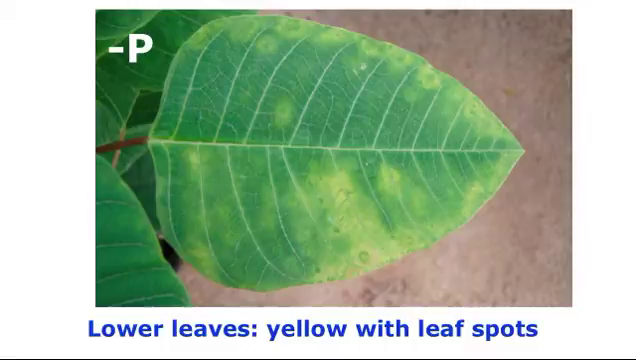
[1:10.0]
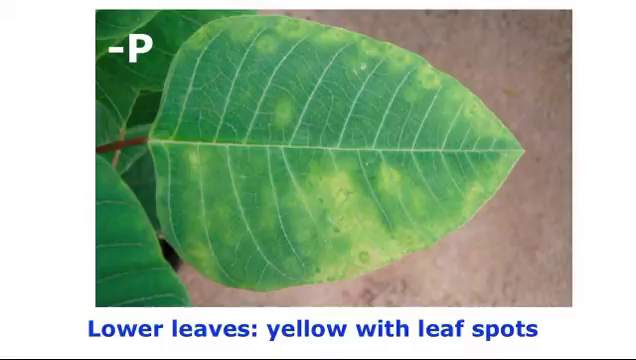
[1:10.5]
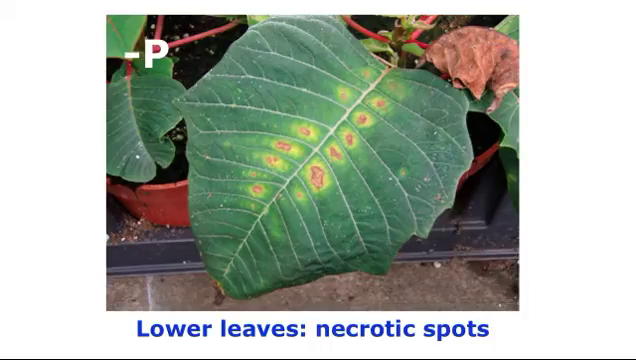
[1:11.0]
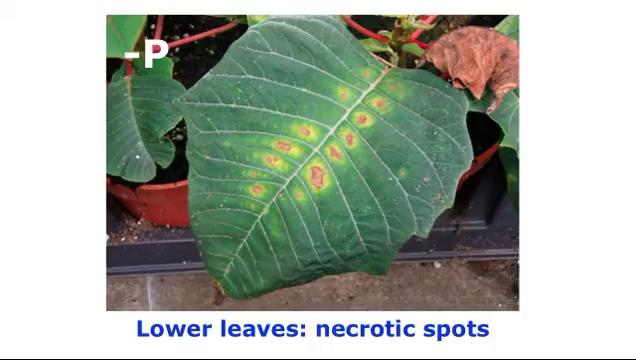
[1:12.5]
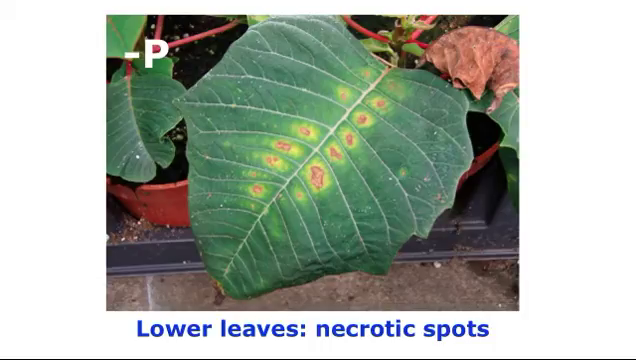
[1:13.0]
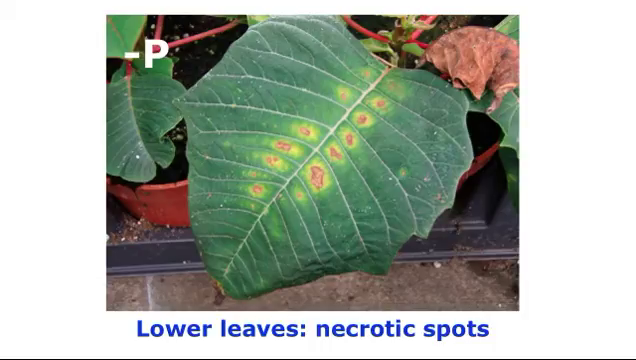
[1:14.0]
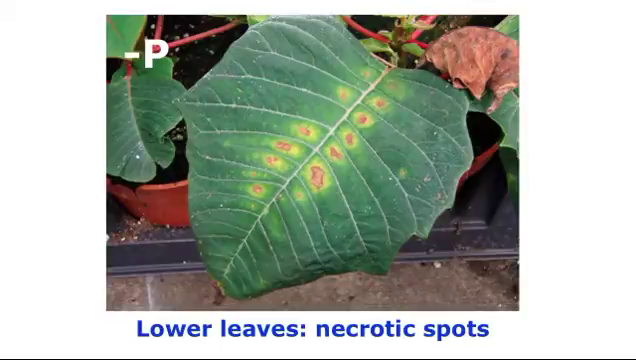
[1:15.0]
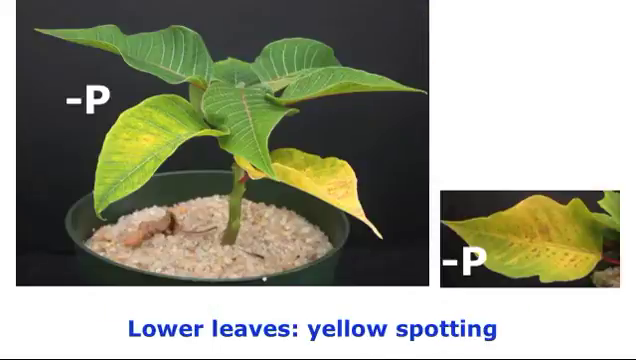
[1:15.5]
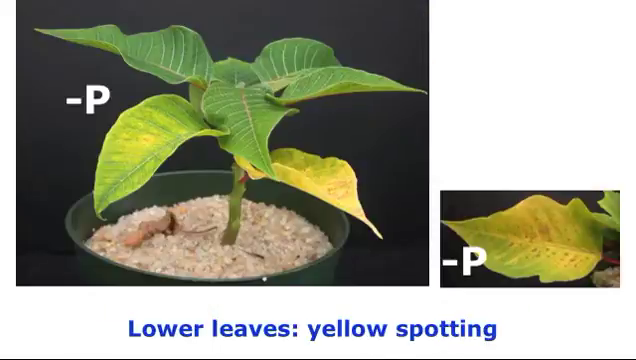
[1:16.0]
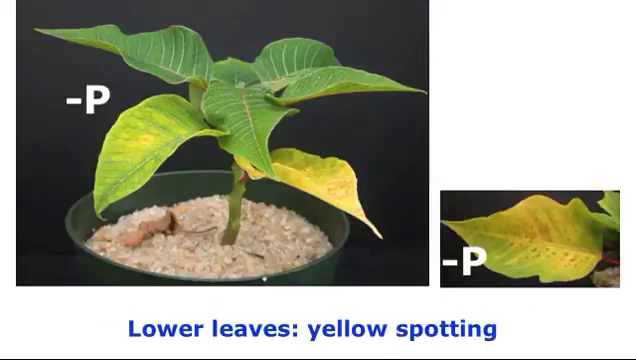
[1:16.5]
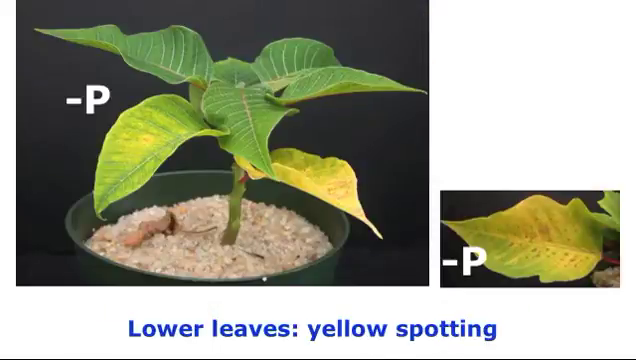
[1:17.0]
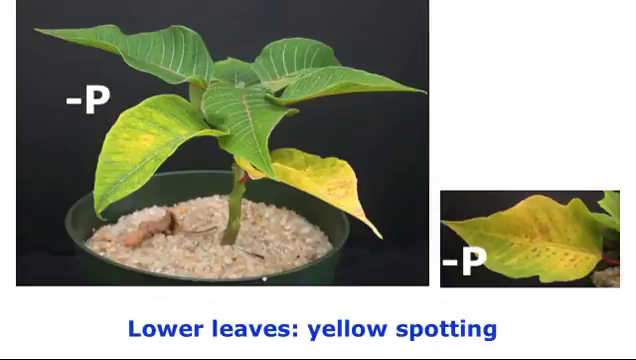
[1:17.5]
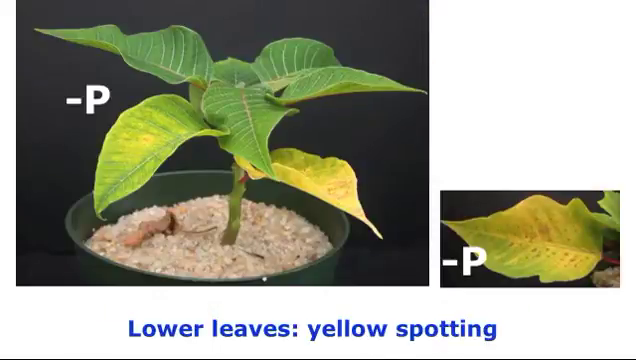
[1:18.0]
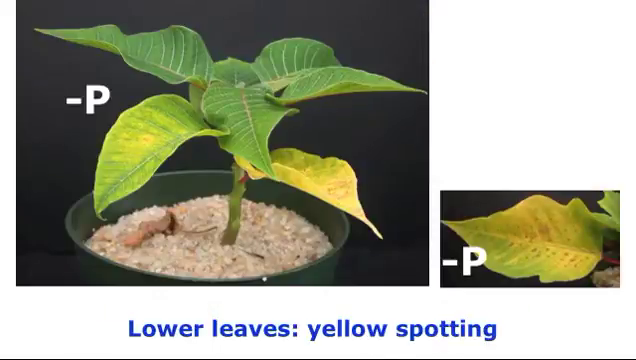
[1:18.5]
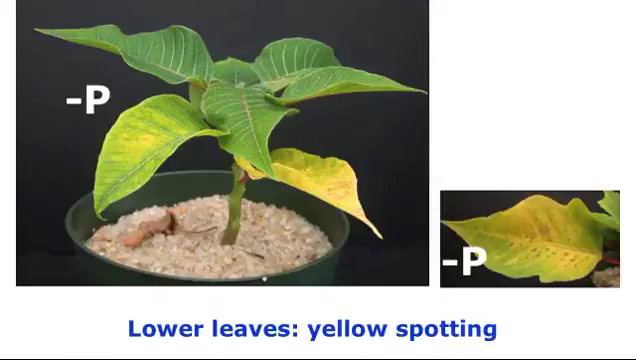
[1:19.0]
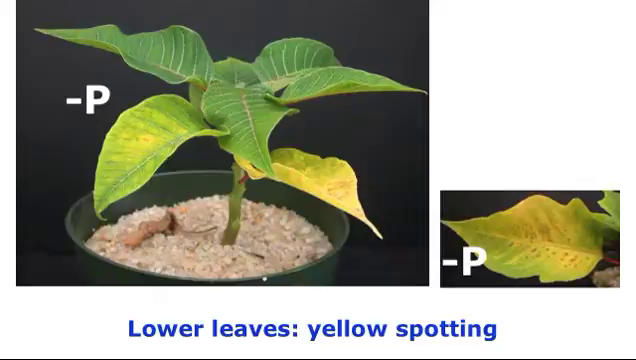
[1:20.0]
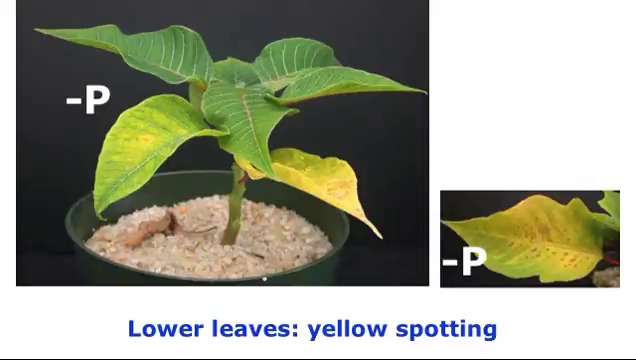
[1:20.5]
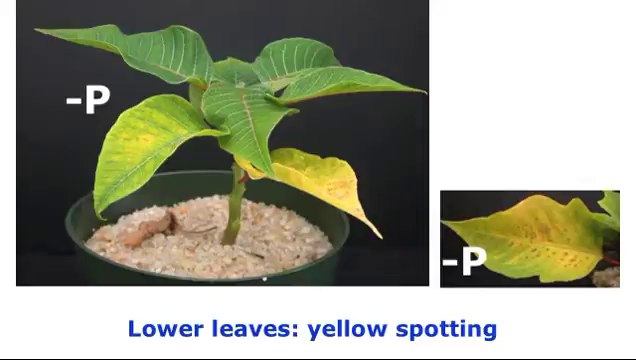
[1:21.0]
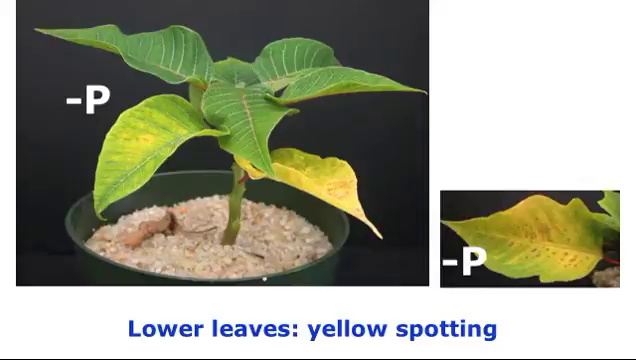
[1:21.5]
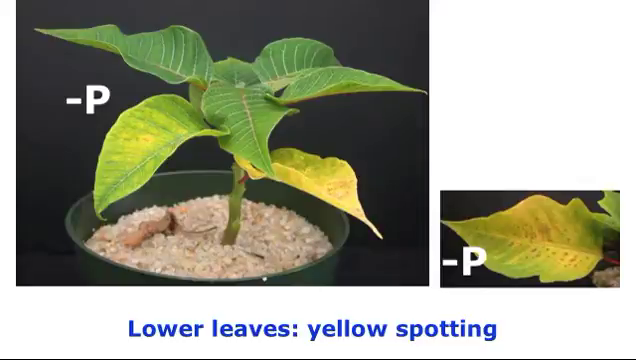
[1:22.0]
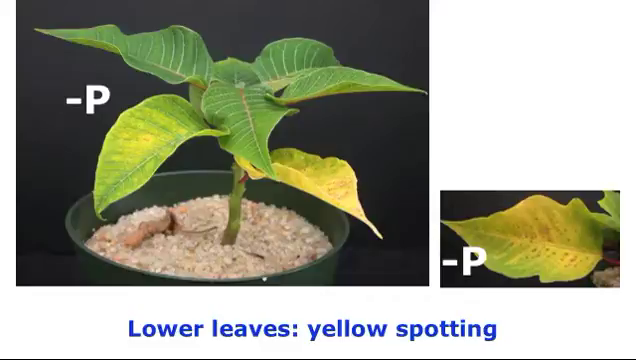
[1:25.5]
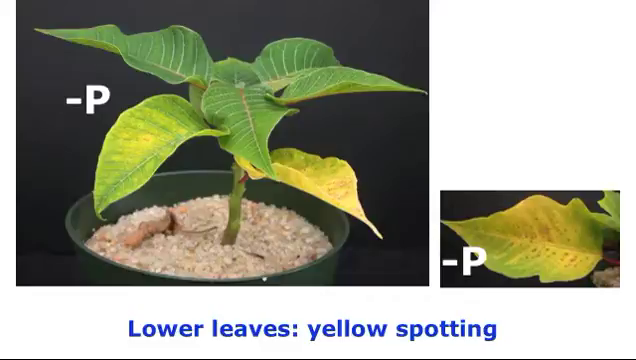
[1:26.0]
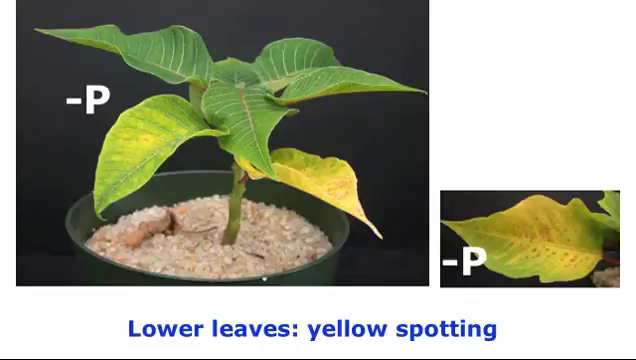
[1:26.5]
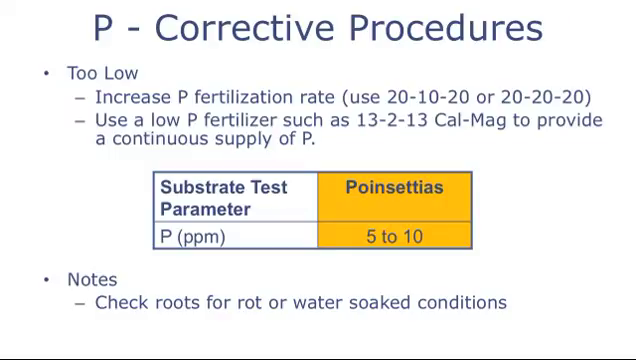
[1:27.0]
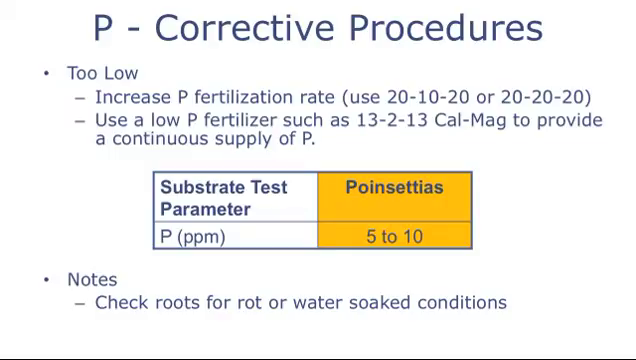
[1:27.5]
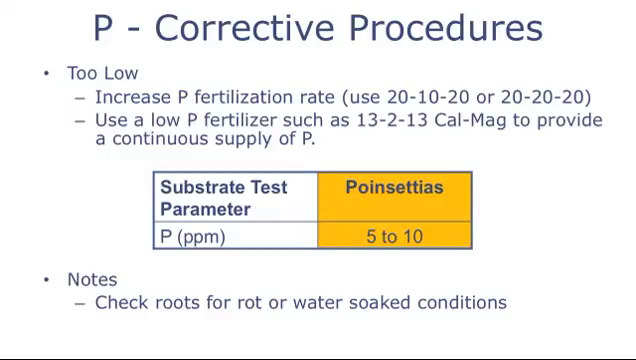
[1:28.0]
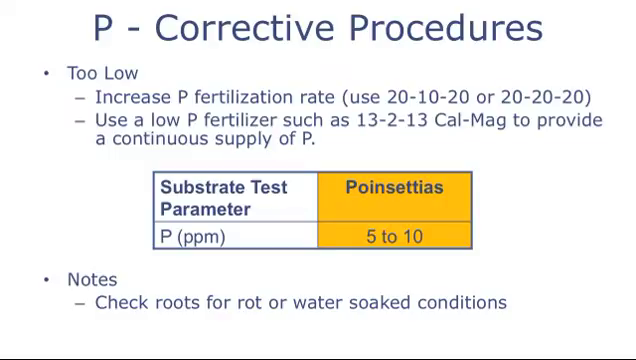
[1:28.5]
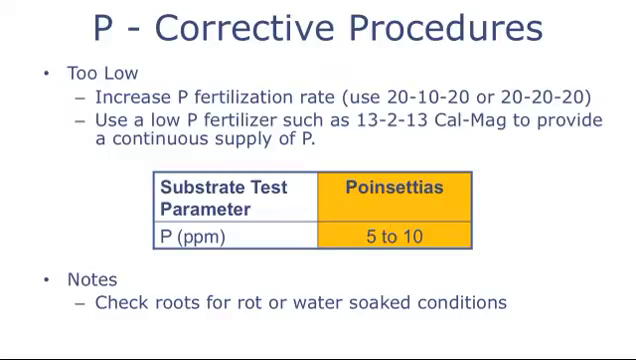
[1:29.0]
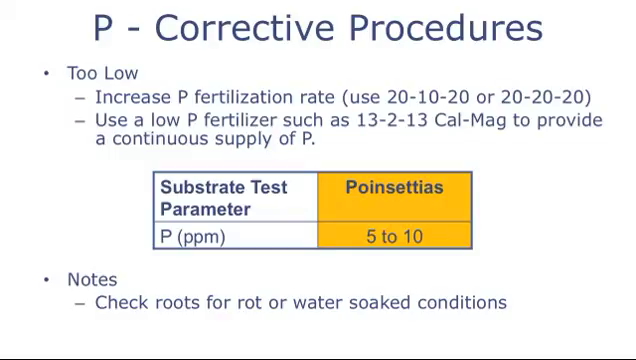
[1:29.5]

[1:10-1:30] A picture of a green leaf shows yellow discoloration and dead spots in the center of the leaf along the stem. The picture is placed on a white background, with "-P" in white lettering in the top left. At the bottom center, blue lettering reads "lower leaves, necrotic spots." The leaf is part of a plant in the background sitting in a red potting plant, next to another plant with similar leaves in another red potting plant on the left side. The scene transitions to another set of pictures: on the left is a larger picture of a smaller plant with similar leaves, with "-P" in white lettering on its left side, and on the right of the screen is a smaller picture of a yellowing leaf, also with "-P" in white lettering on its left side. Blue lettering at the bottom center reads "lower leaves yellow spotting." Both pictures and the text are in front of a white background. The slide then transitions to a white background with blue lettering. The title at the top reads "P-corrective procedures." Beneath it, the first bullet point, in blue lettering, reads "too low," followed by a hyphen point reading "increase P fertilization rate. Use 2010-20 or 2020-20" and another hyphen point reading "use a low P fertilizer such as 13-13 Cal Mag to provide a continuous supply of P." A small chart reads "substrate test parameter" on the left with "P (PPM)" beneath it; on the right, a red header reads "poinsettias" in blue text, with "5 to 10" beneath it. Another bullet point at the bottom of the screen reads "notes," with a hyphen point beneath it reading "check roots for rot or water soaked conditions."